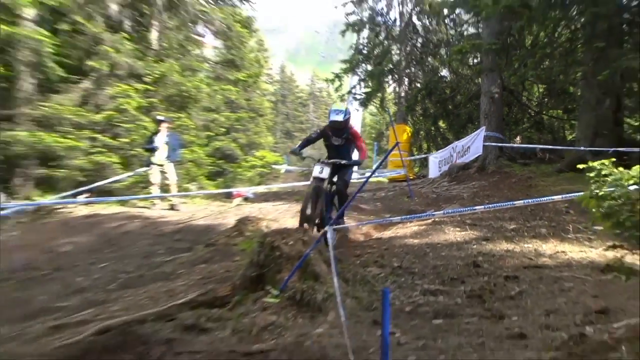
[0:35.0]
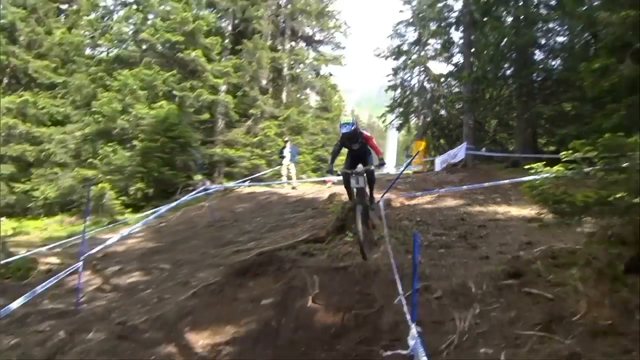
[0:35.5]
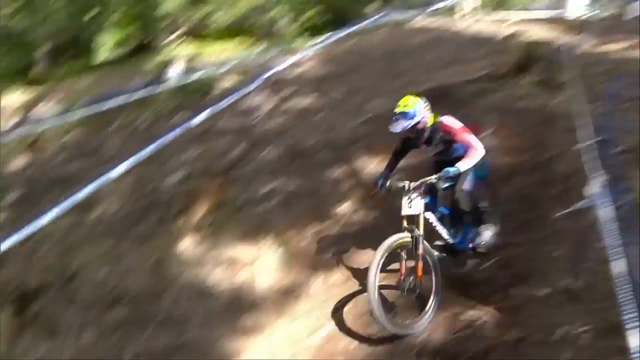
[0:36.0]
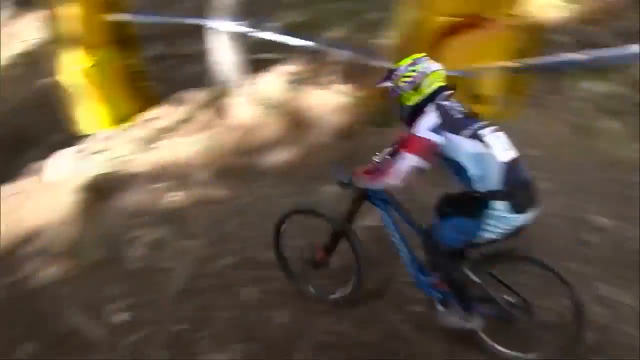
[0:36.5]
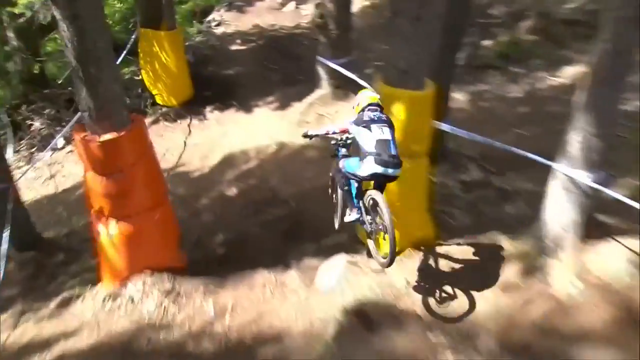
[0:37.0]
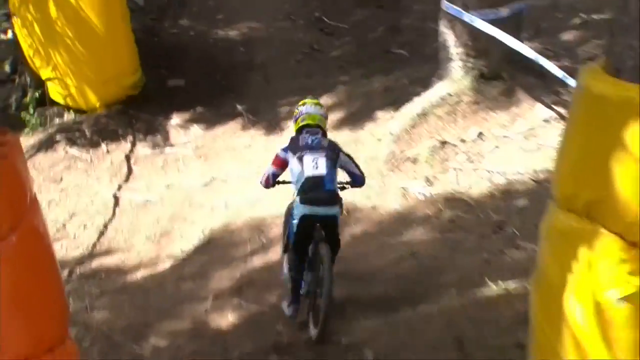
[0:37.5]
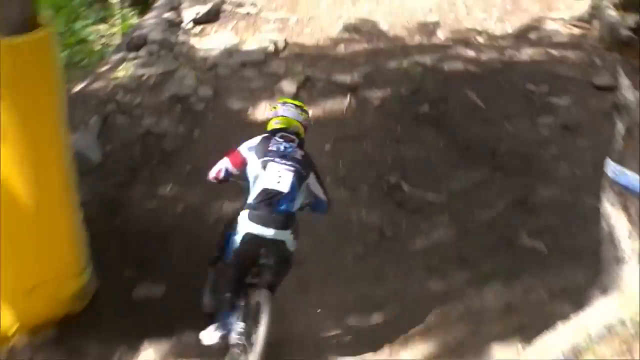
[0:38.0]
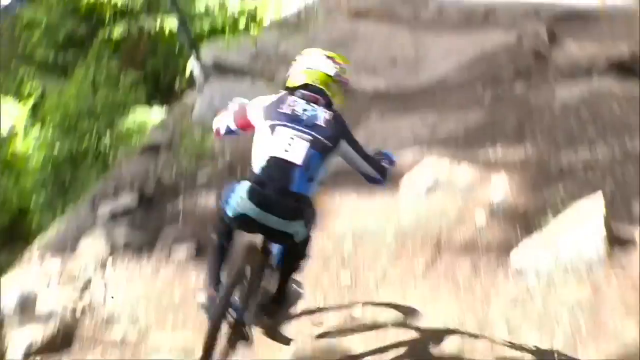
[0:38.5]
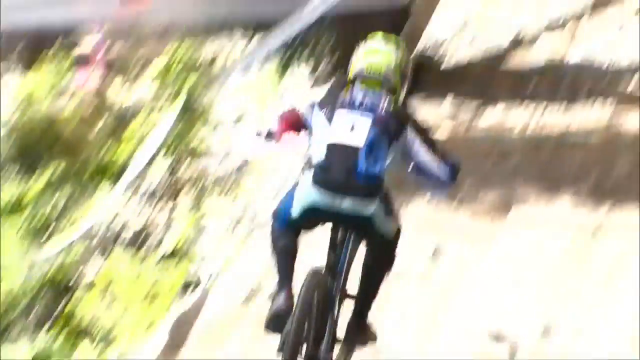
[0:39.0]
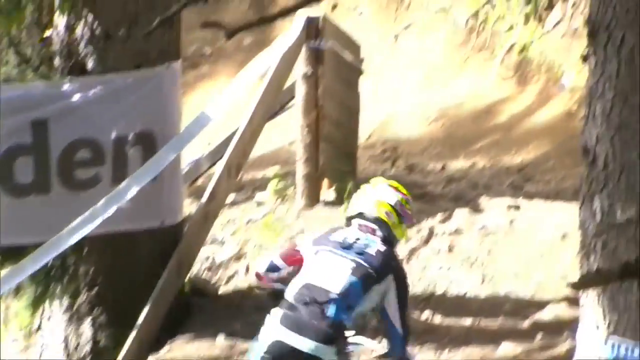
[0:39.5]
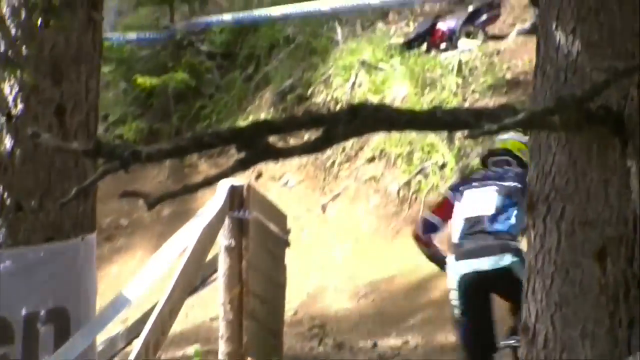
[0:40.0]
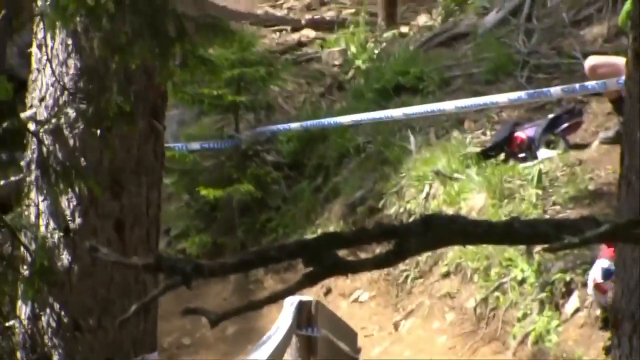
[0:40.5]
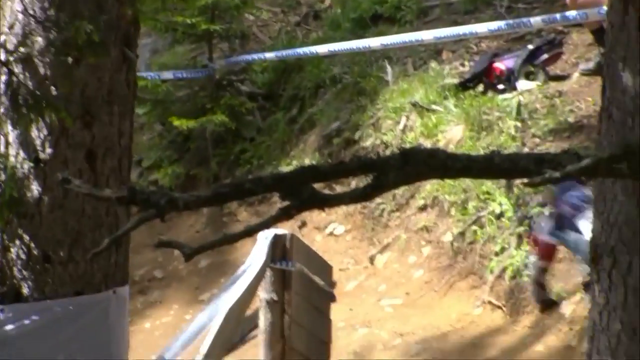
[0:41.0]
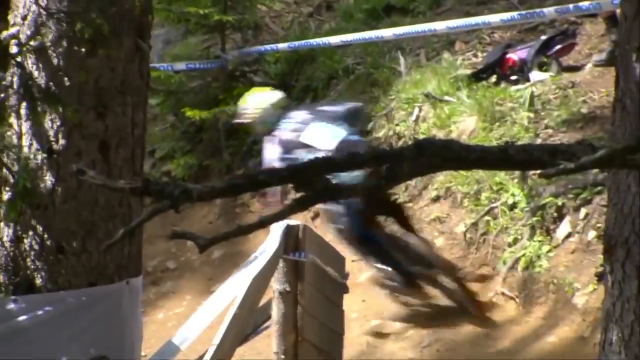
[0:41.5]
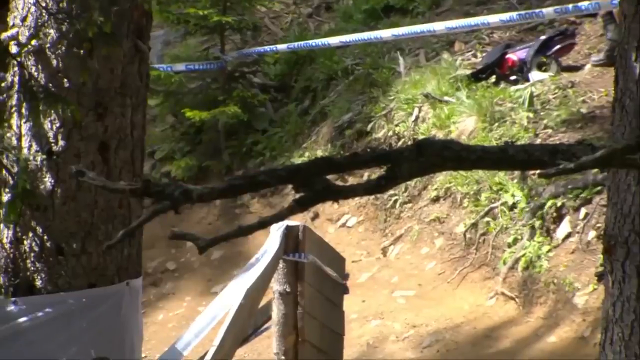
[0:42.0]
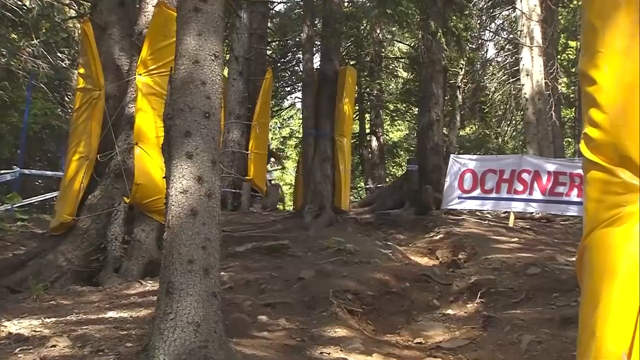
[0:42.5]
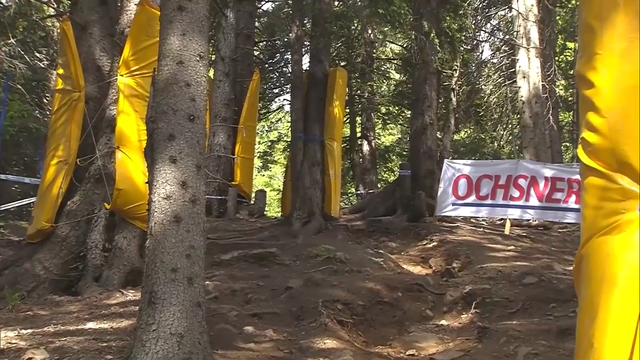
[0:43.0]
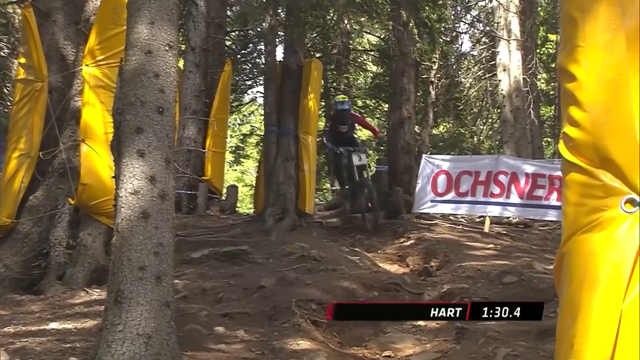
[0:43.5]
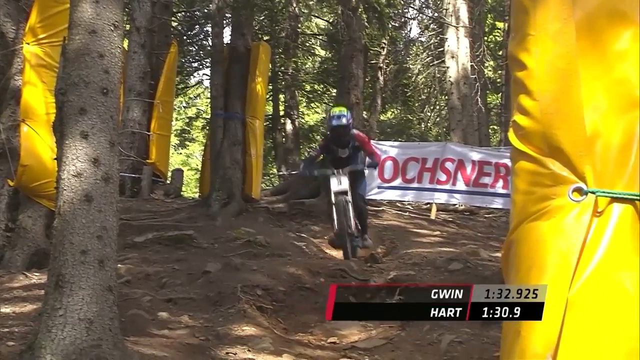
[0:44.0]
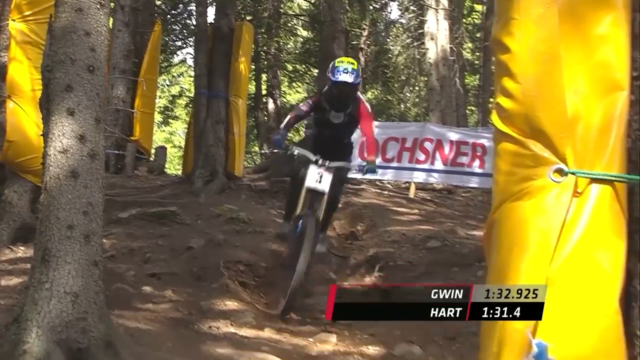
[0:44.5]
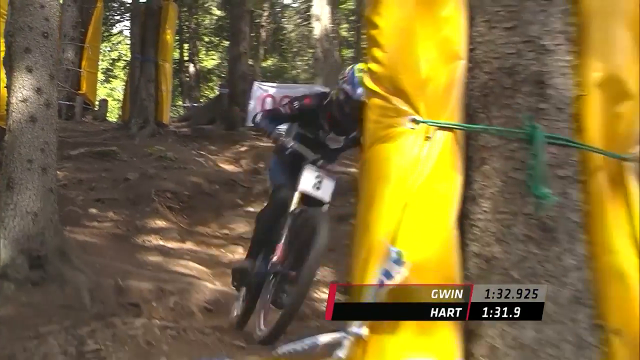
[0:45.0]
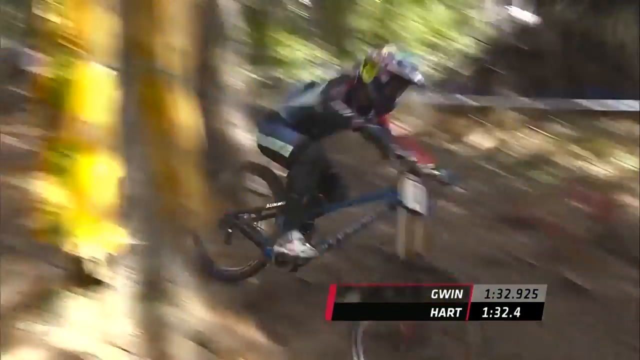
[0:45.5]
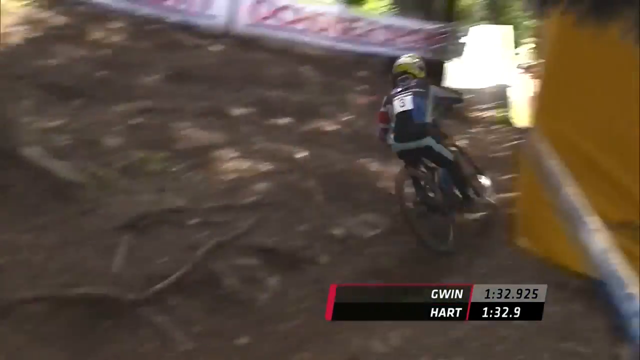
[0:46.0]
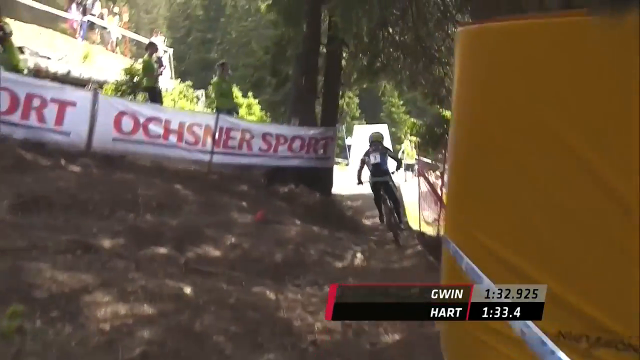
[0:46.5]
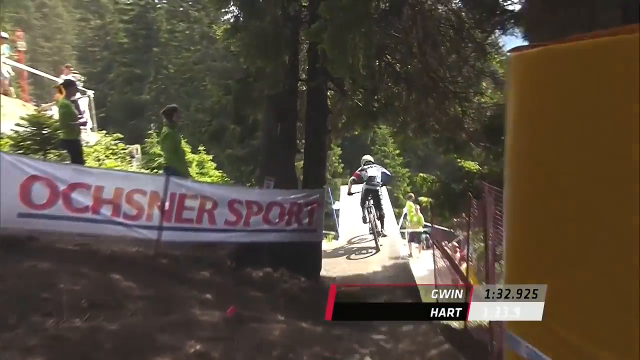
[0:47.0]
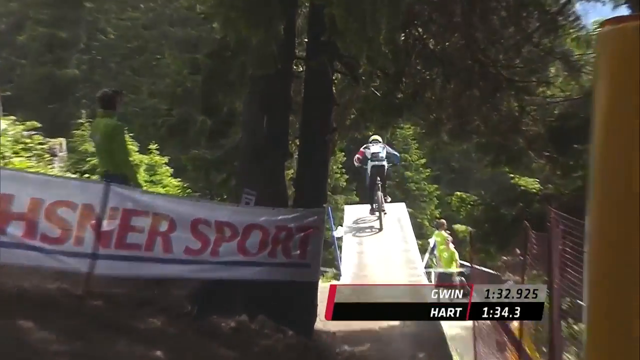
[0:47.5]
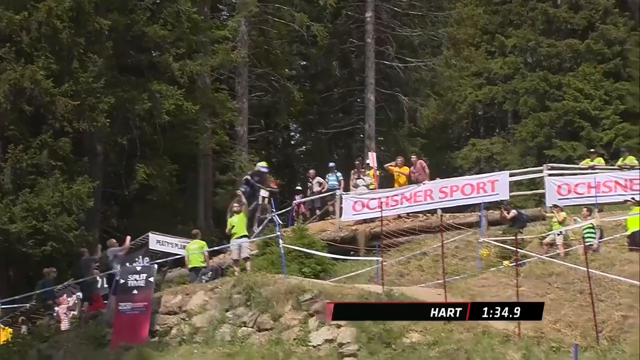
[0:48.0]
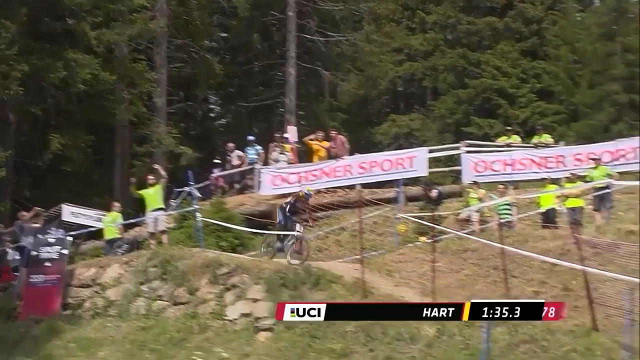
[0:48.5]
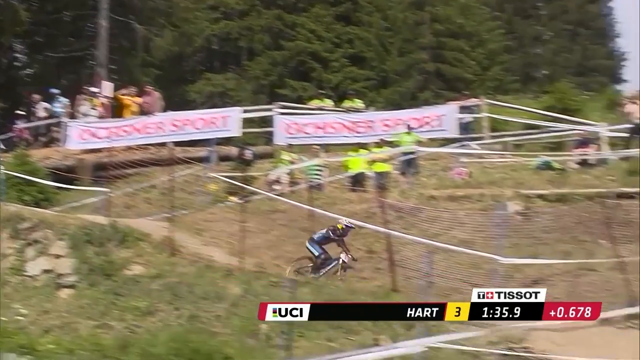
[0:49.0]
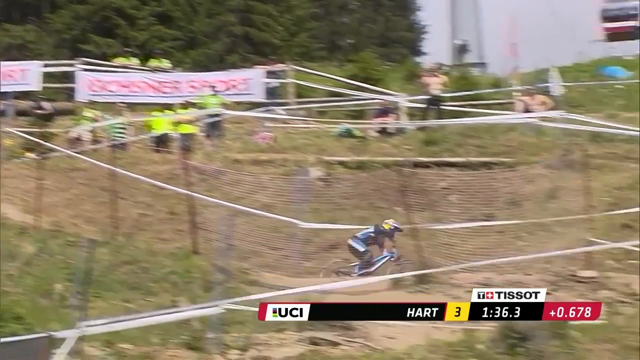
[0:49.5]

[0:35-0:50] The biker goes through a narrower part of the path, carefully maneuvering around trees wrapped in padding. He then shoots straight off a narrow platform and over a small cliff, where a bunch of spectators on the cliff celebrate as he goes. He lands on the path and continues down it. At the bottom of the screen, his name and the time he has been on the path are shown. He continues down the path to the next part of the race track.